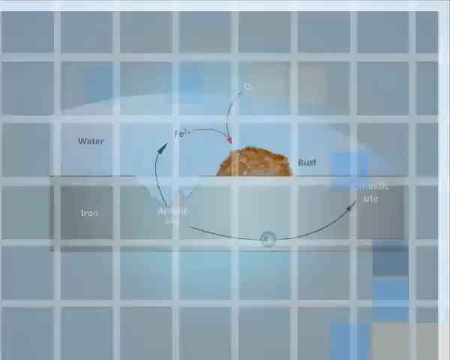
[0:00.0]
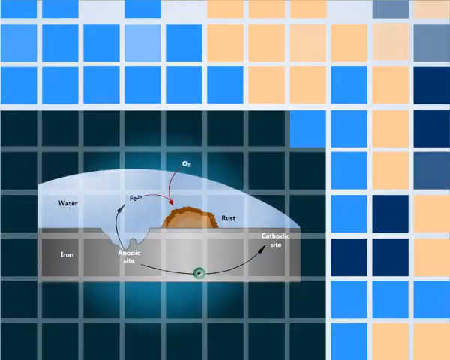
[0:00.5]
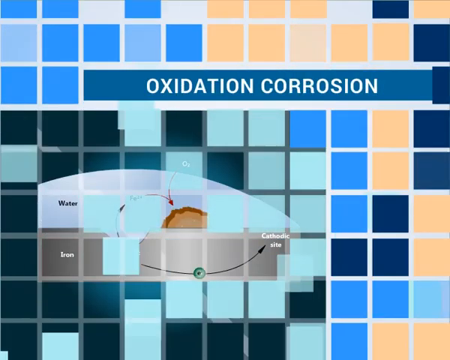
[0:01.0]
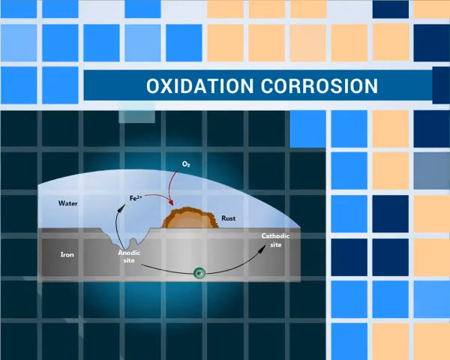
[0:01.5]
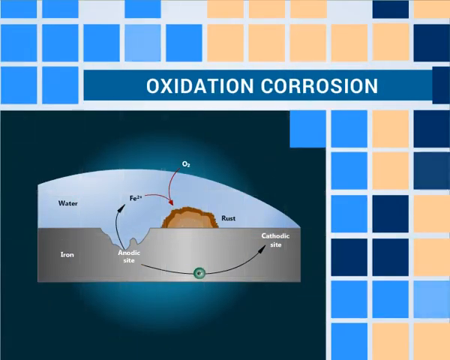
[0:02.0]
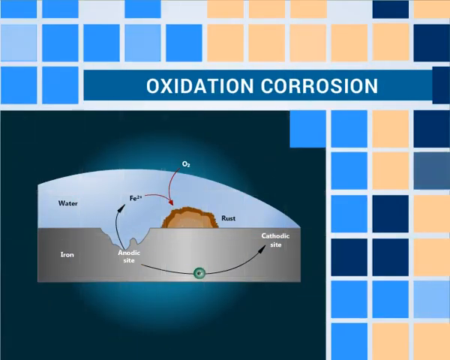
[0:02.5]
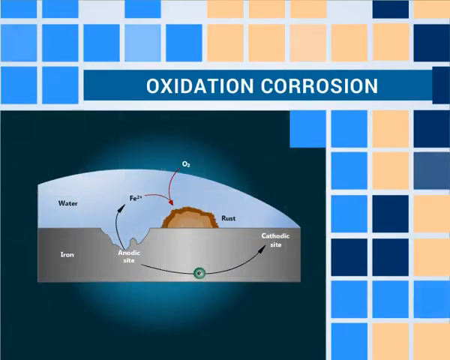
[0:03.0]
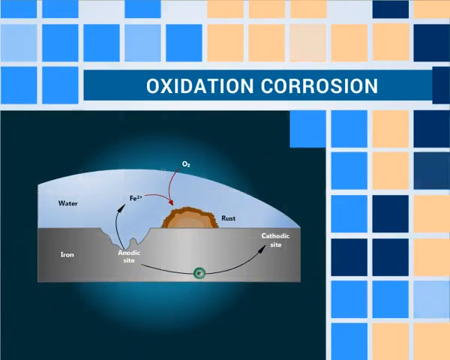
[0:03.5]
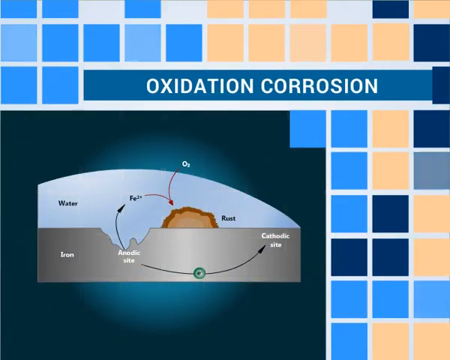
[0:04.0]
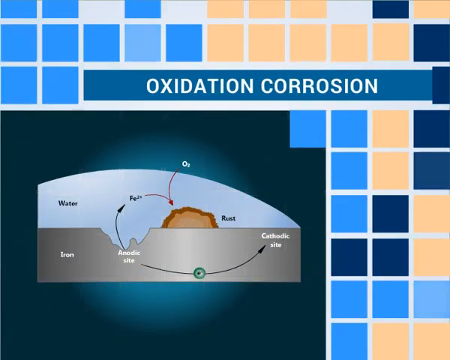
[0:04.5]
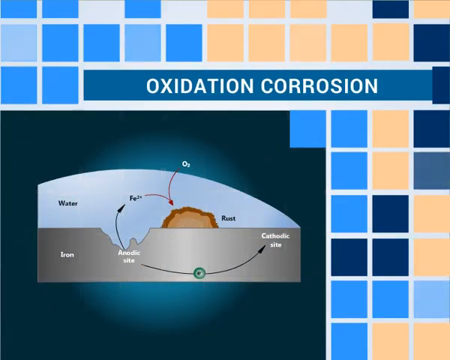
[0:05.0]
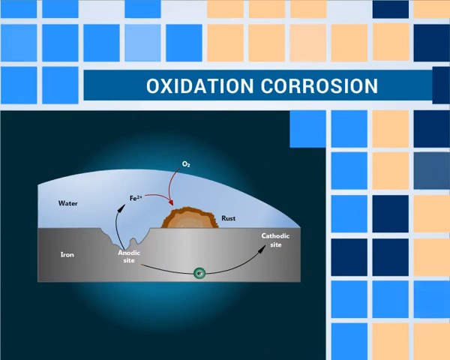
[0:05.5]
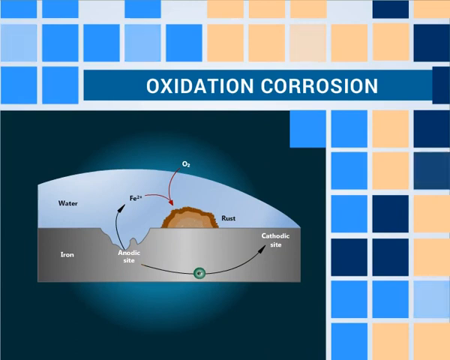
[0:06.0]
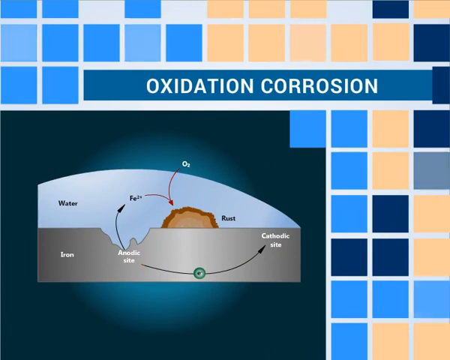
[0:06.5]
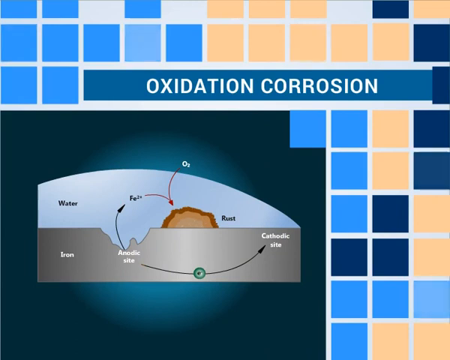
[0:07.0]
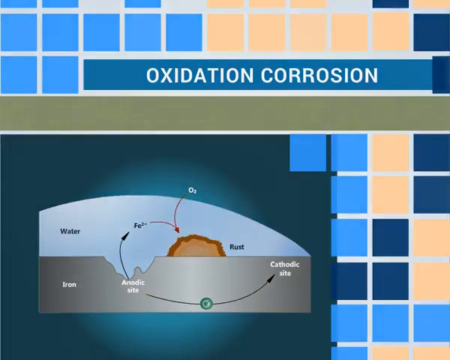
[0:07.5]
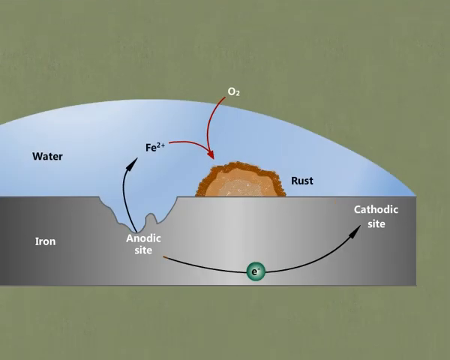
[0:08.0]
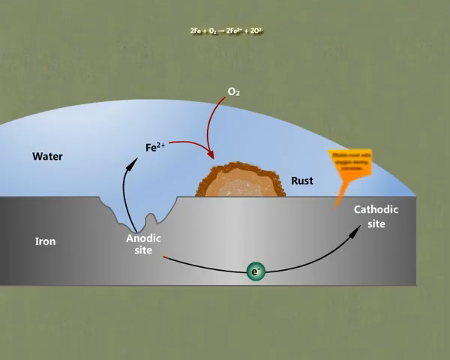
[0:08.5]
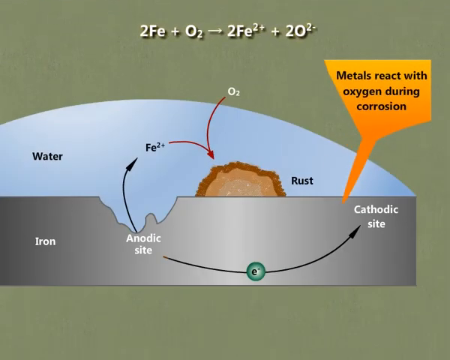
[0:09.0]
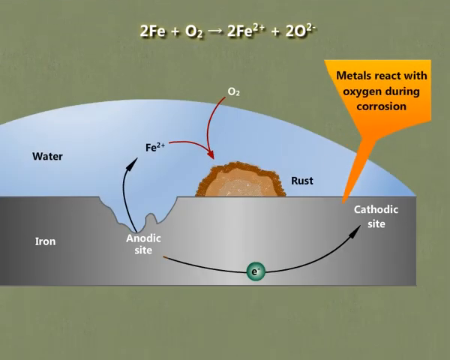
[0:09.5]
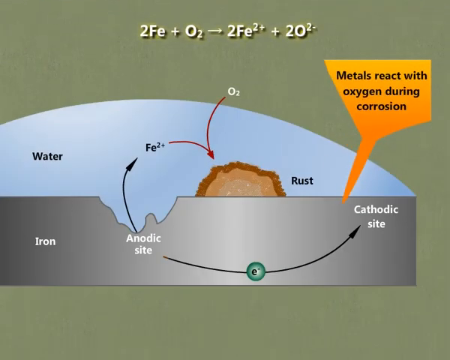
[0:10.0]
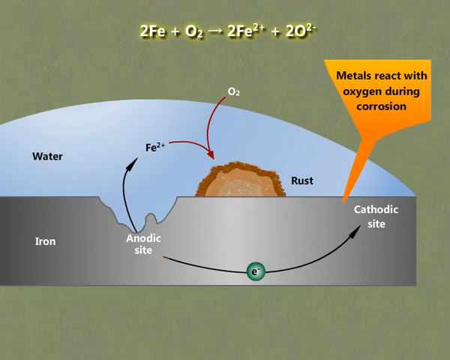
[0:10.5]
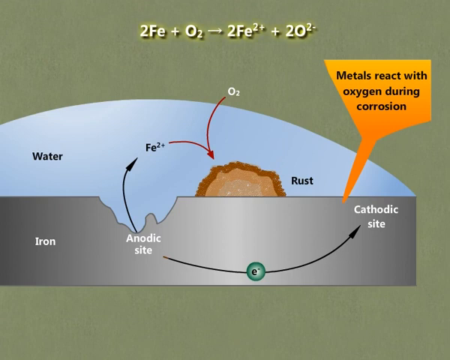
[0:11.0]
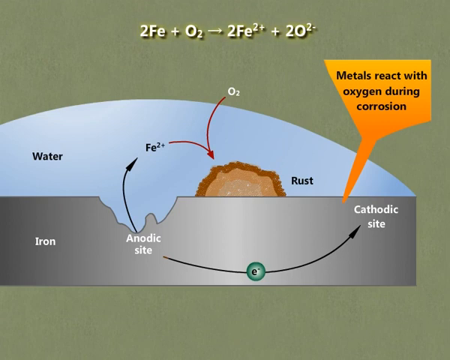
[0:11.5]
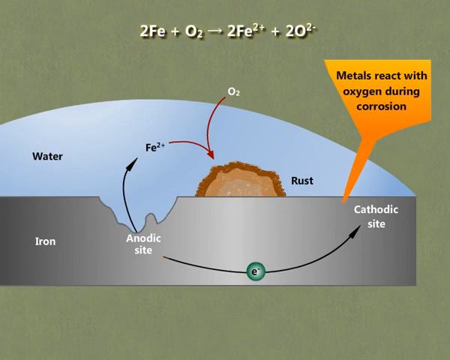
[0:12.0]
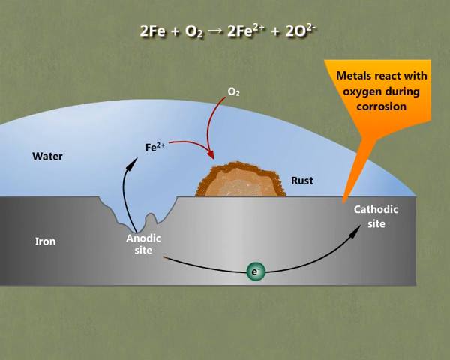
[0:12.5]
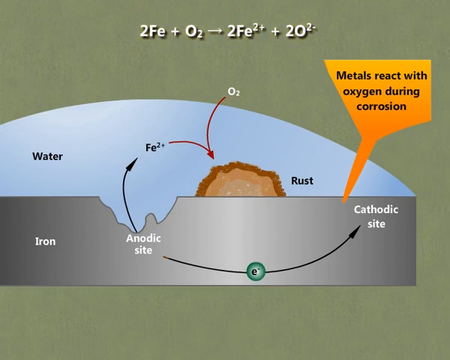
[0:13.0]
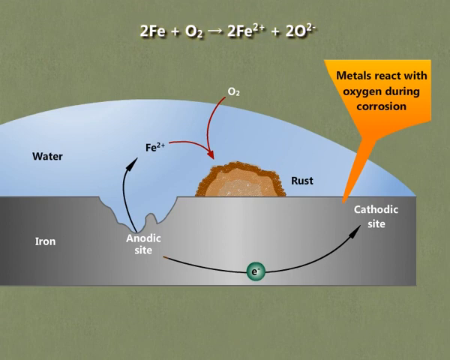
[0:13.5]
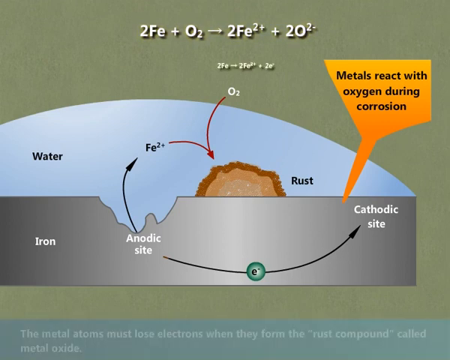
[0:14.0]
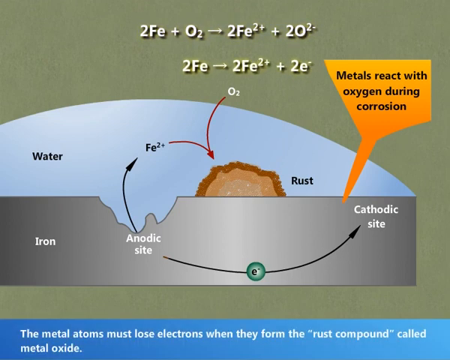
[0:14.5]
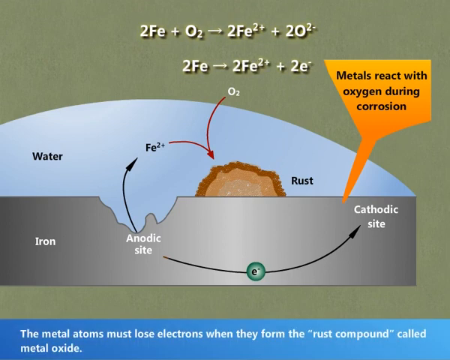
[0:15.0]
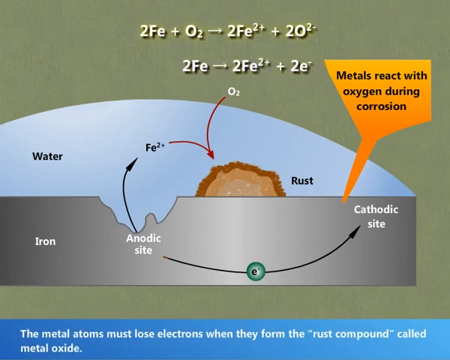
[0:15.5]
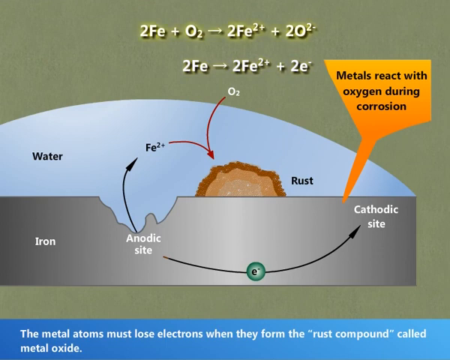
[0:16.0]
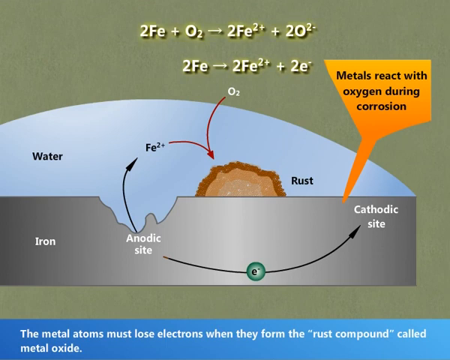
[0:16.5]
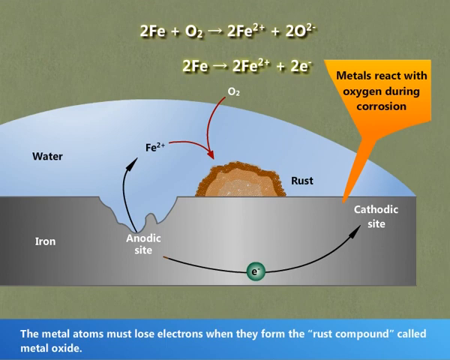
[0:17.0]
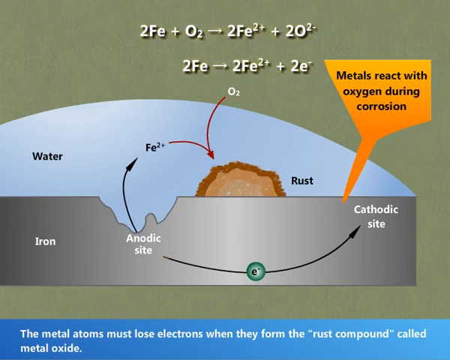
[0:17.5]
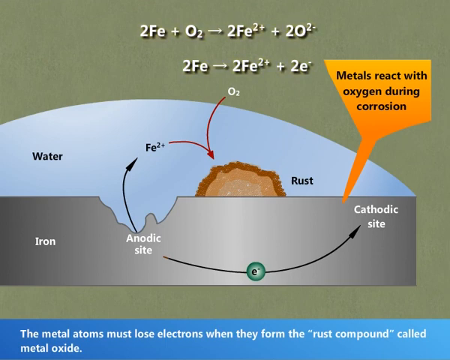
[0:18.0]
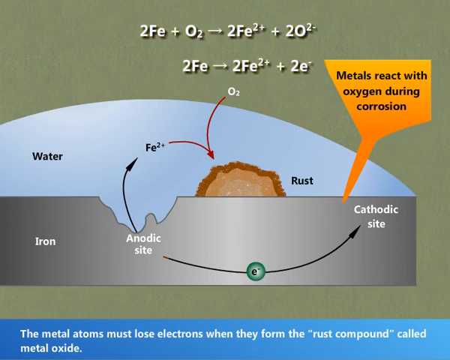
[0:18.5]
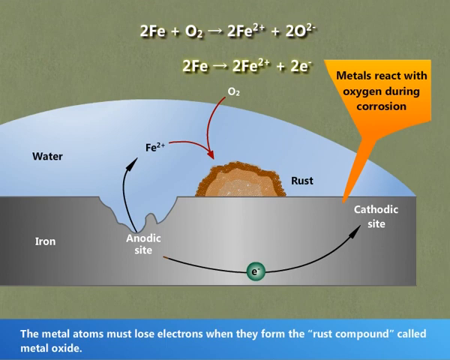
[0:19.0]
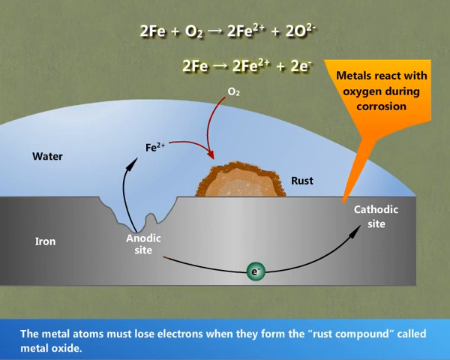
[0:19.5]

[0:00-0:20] The video opens on what appears to be a grid. Inside the grid are the words "water," "iron" and "rust," along with some arrows and lines pointing in different directions. The scene changes to a bunch of squares in the background in various colors: peach, tan, light blue, dark blue, forest green and a lighter green. The words "iron" and "water" appear, along with what seems to be "cathodic site." More arrows and lines point at a brown substance, probably meant to be iron. The squares in the grid kind of light up and pulsate. The scene changes again to an illustration of an iron surface. Words in an orange bracket say "metals react with oxygen during corrosion," and the words "water," "iron," "anodic site," "rust" and "cathodic site" are visible. Elemental combinations are shown at the top of the screen in white text.